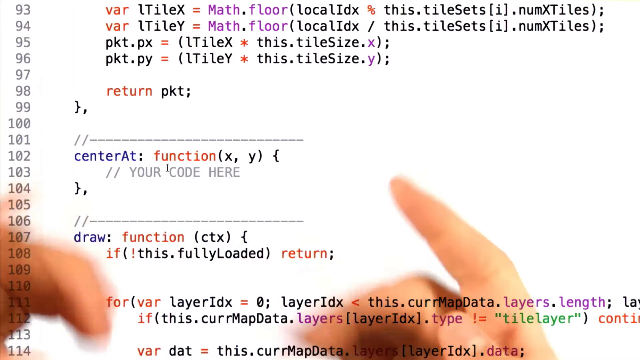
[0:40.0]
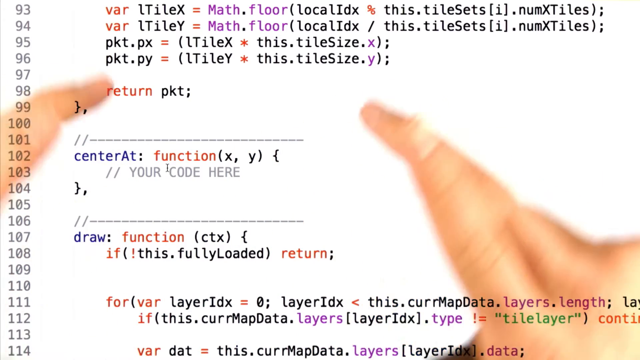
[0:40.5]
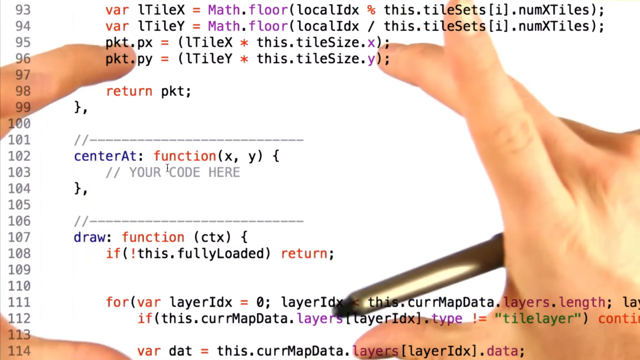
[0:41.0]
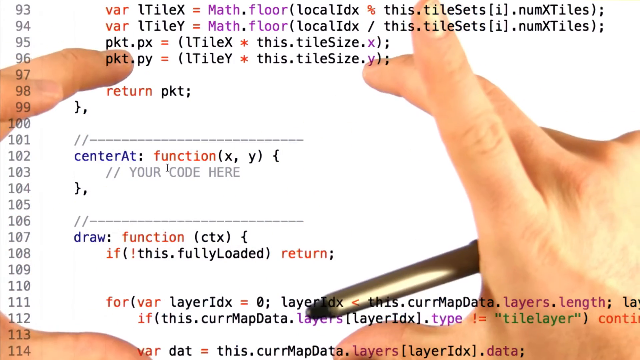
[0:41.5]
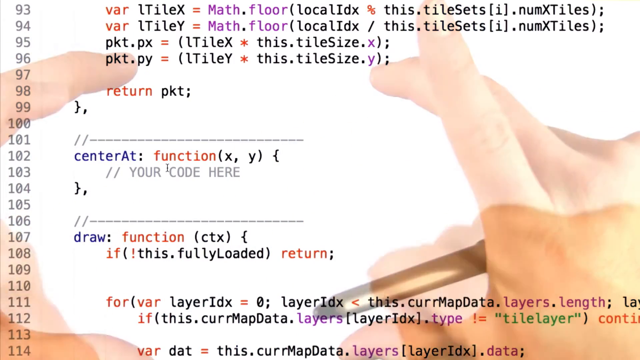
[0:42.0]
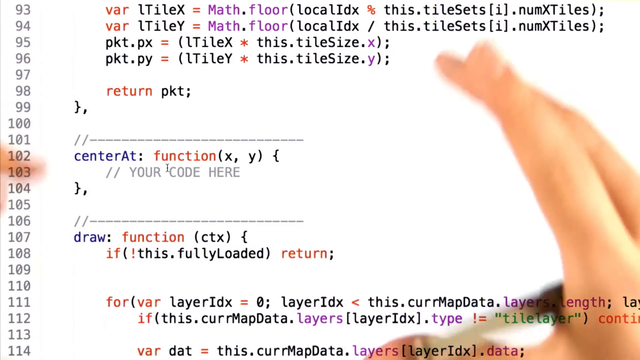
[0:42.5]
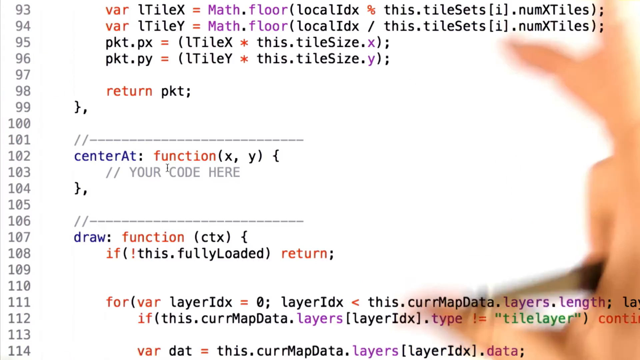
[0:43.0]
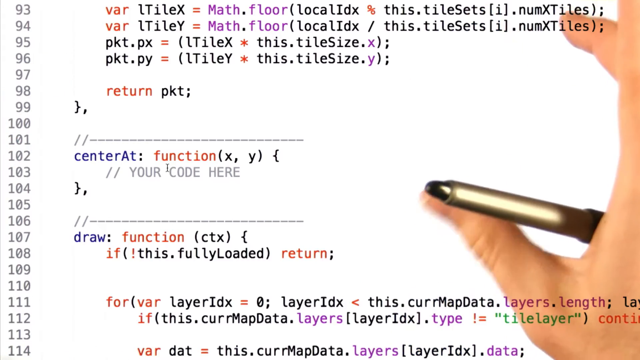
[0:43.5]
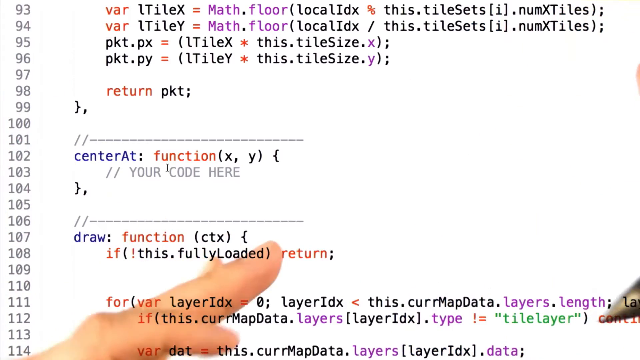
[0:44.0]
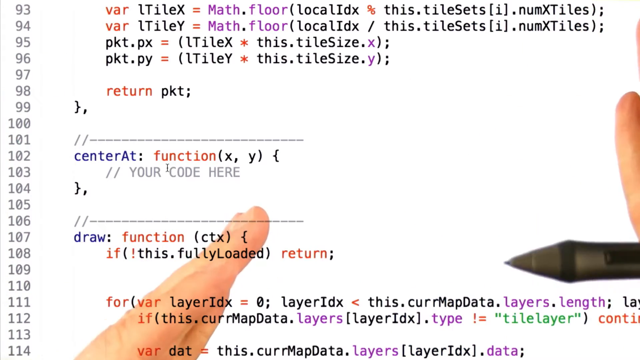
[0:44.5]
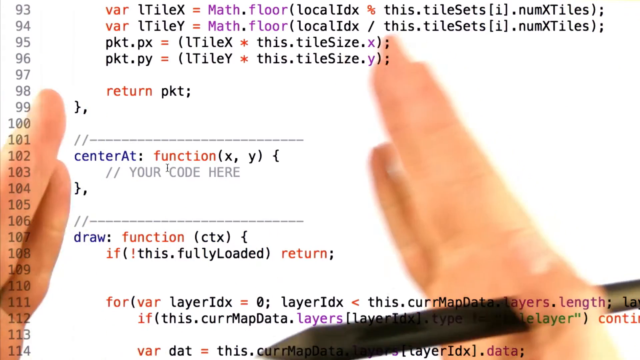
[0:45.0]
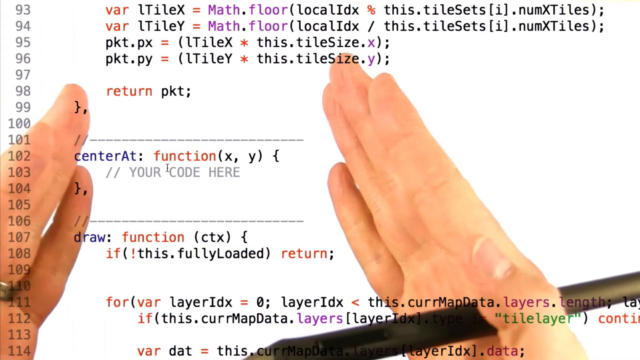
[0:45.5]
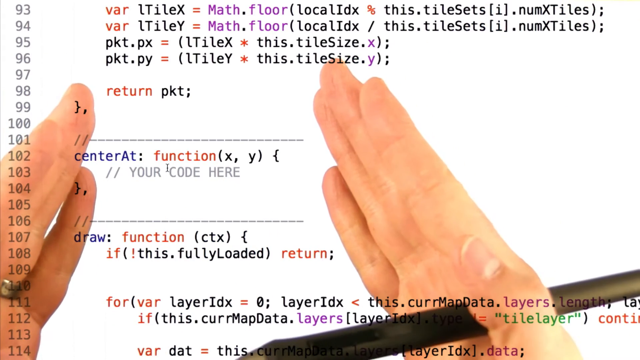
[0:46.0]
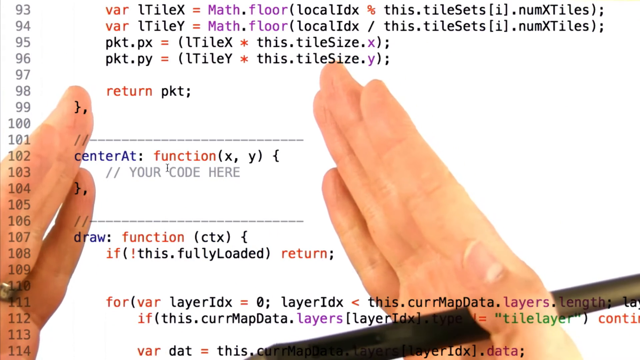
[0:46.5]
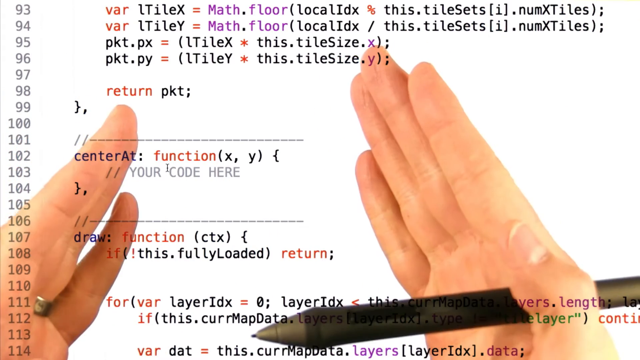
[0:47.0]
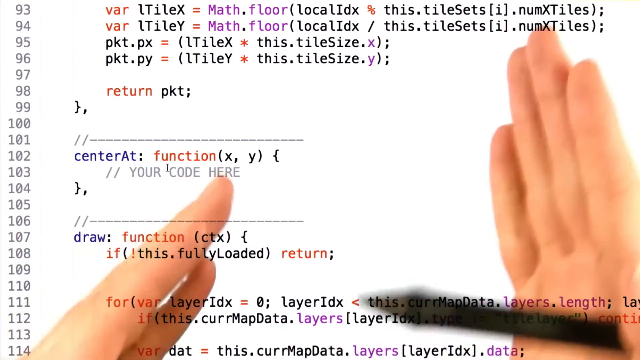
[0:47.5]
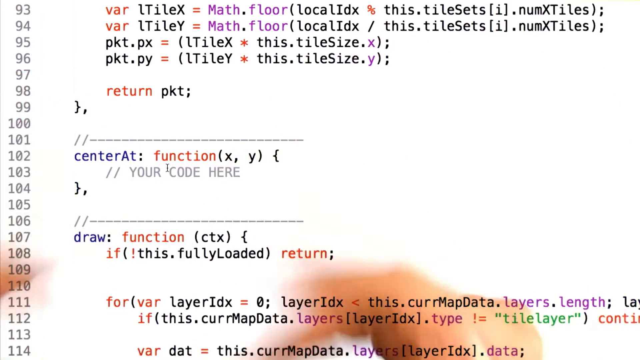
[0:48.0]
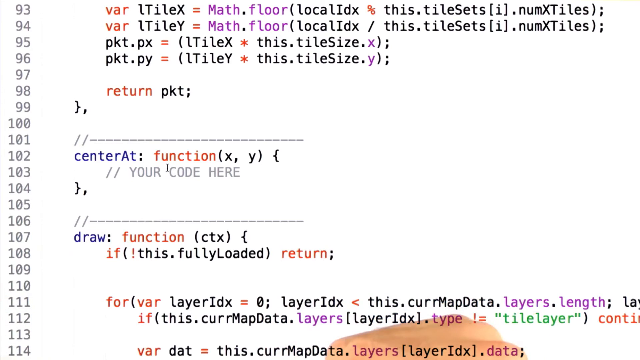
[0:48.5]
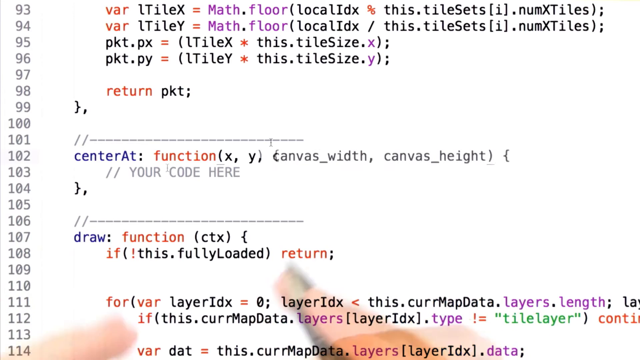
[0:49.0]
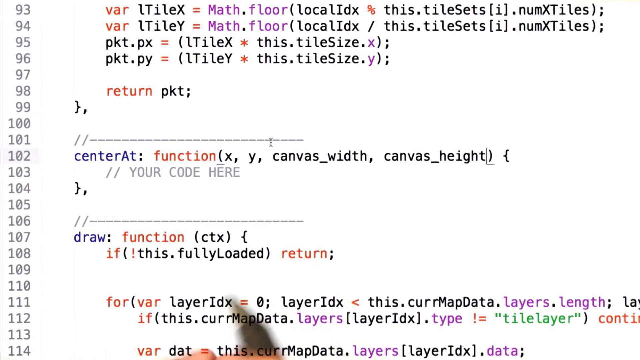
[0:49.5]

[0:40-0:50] The man points at parts of the code, seemingly at lines 93 through 96, and makes a square with his hands. He then focuses on the code between lines 98 and 100, where it says "return" in red, followed by "pkt;" in black. He focuses on line 102, where new code pops up reading "canvas_width, canvas_height", written in black.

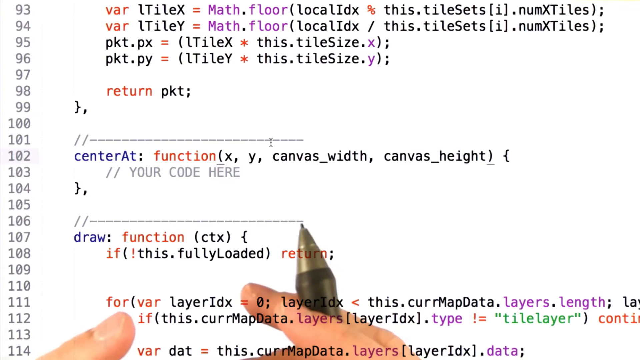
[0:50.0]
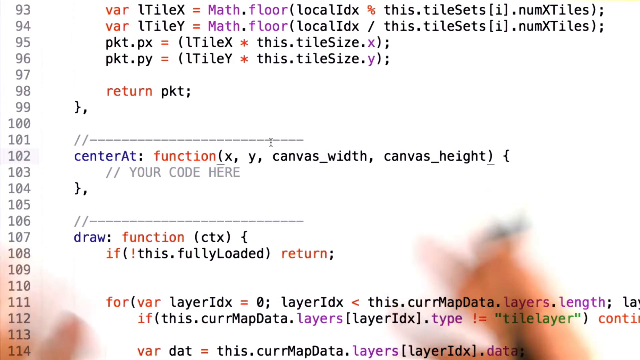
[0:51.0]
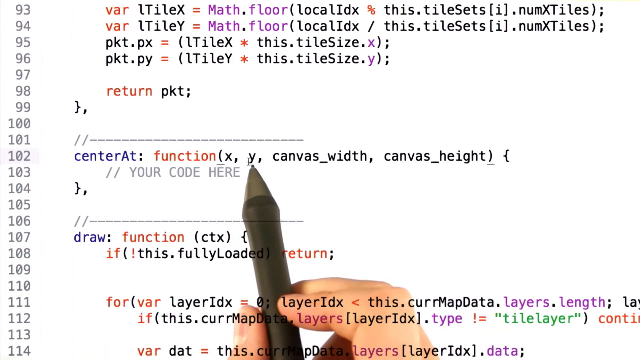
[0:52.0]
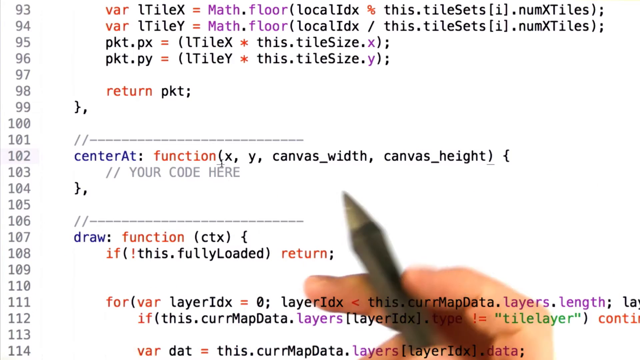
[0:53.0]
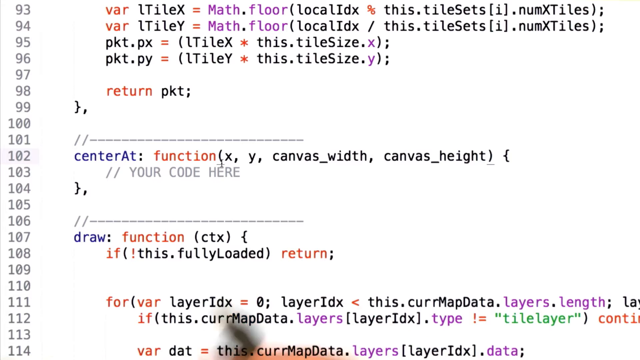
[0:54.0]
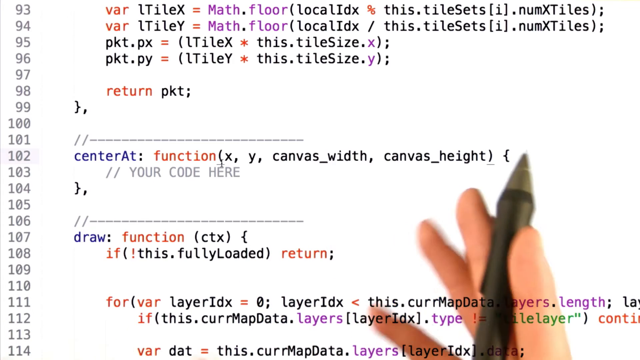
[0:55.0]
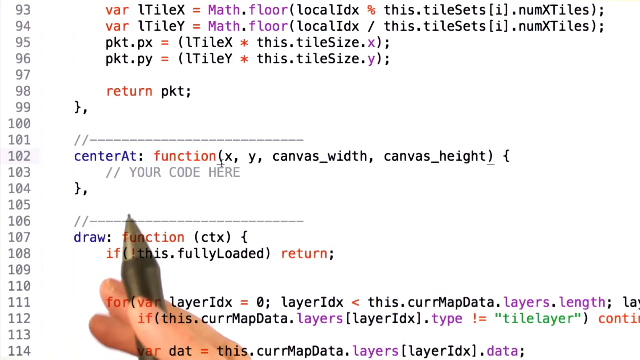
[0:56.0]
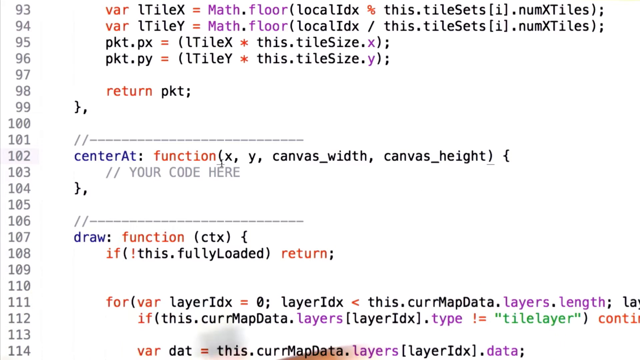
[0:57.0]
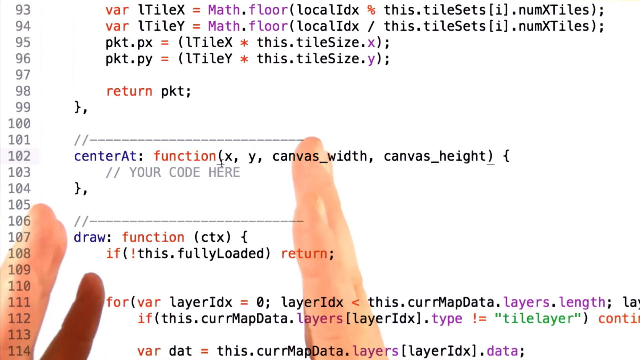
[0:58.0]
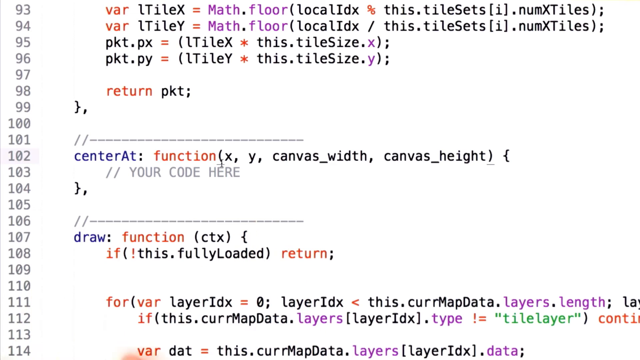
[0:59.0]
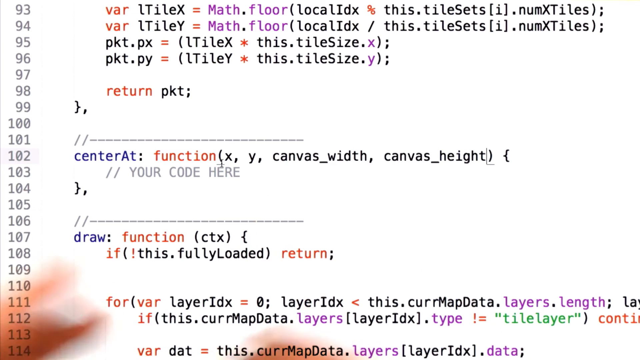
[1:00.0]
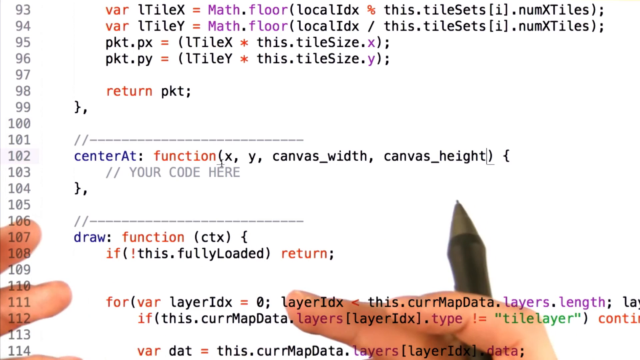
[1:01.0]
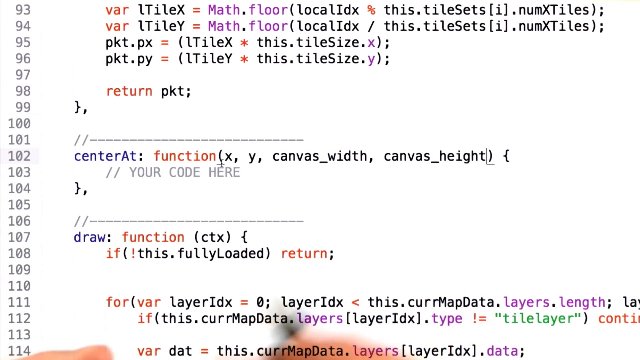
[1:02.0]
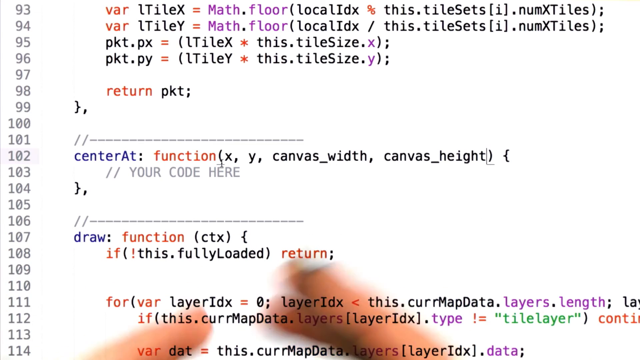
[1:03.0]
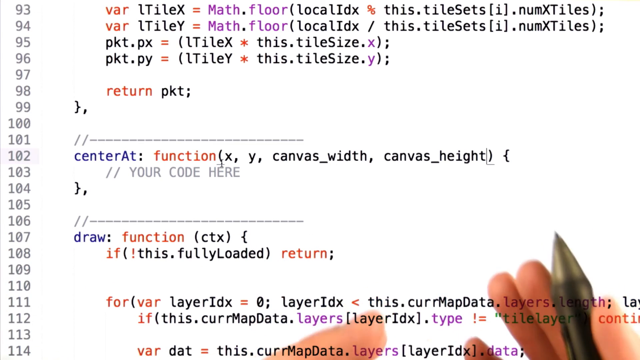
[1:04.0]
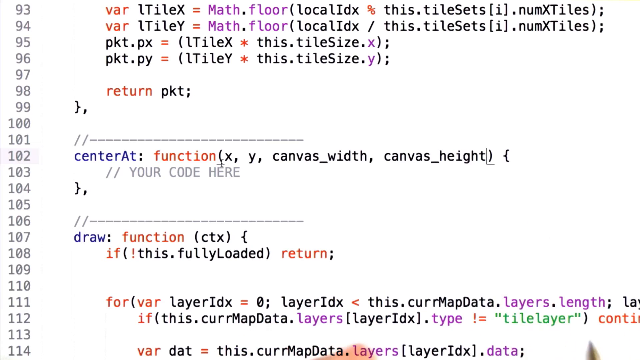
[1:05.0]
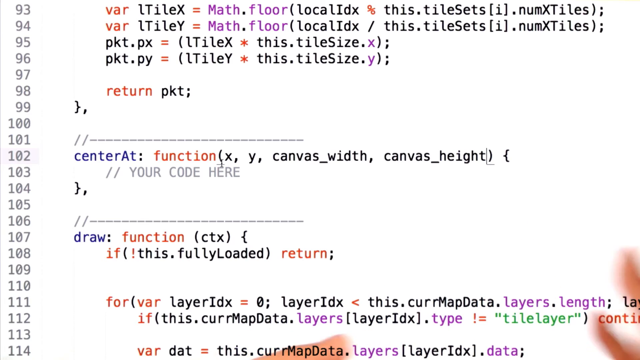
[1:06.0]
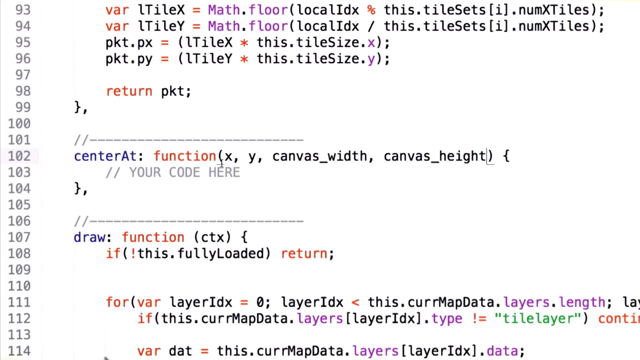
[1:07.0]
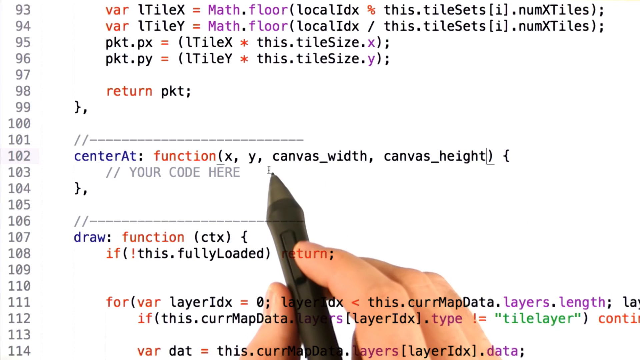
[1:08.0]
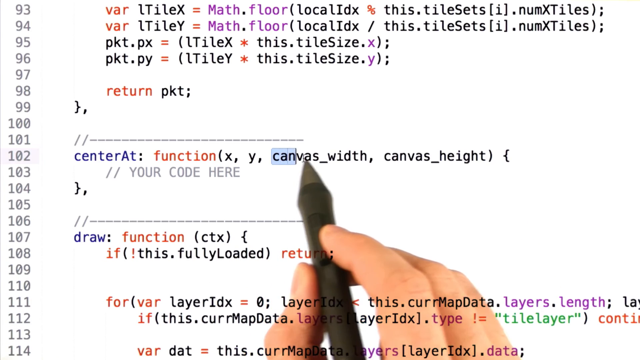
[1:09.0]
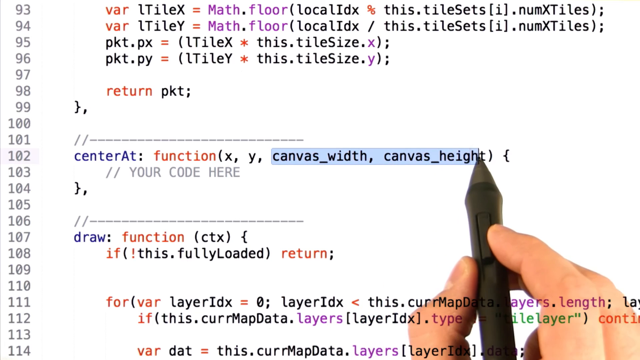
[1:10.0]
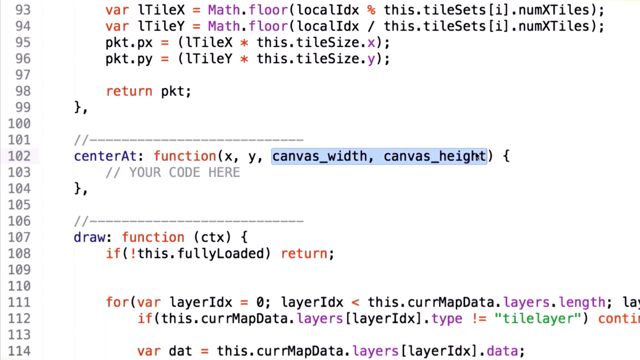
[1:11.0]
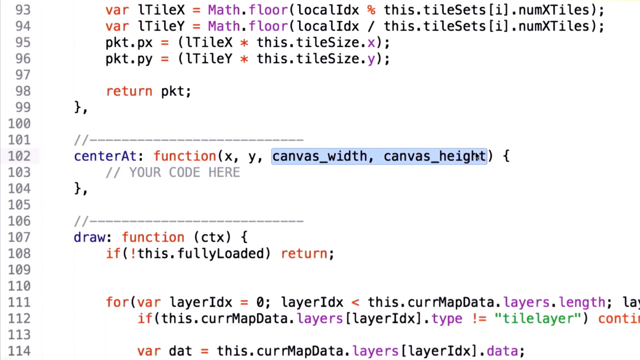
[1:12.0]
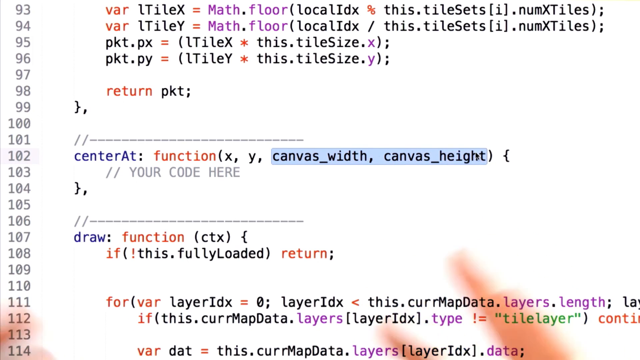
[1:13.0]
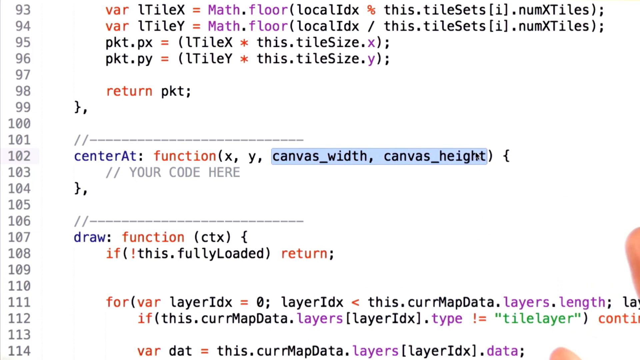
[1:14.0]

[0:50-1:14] The man holds out his pen in his right hand; it is dark maroon red with a gold tip and seems to be a pen for pointing at things on a screen such as an iPad. He points at the code on line 102, which reads "center at" in blue, "function" in red, then a parenthesis with x, y, canvas width and canvas height. He then uses his fingers to point out other code in between and below that, on line 107, focusing on a part that includes "return". He uses his pen to highlight "canvas_width" and "canvas_height" in an extremely transparent blue. The code apparently controls how the box moves and functions as the character moves from left to right in the game.